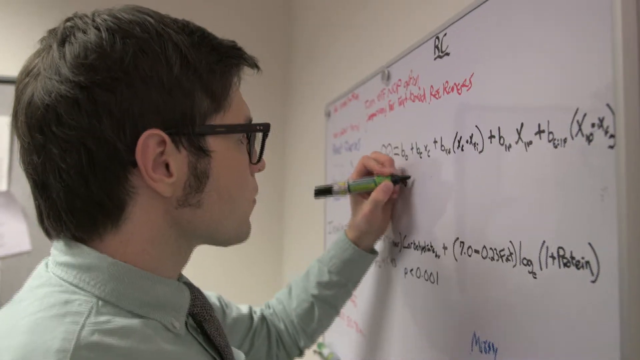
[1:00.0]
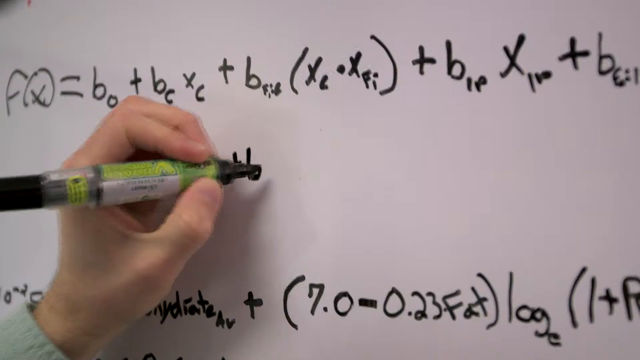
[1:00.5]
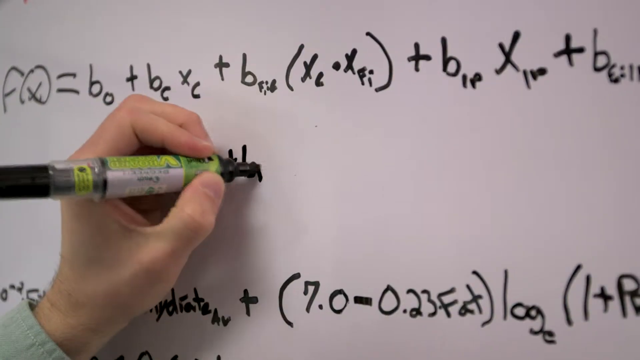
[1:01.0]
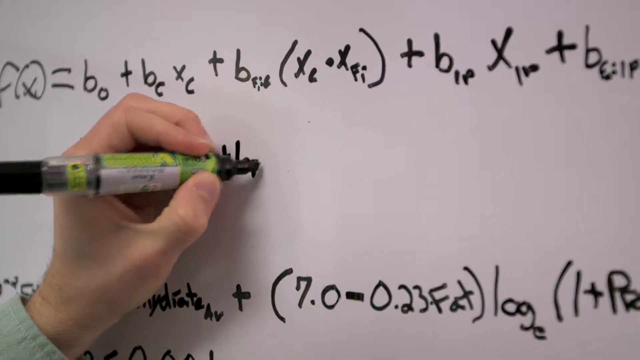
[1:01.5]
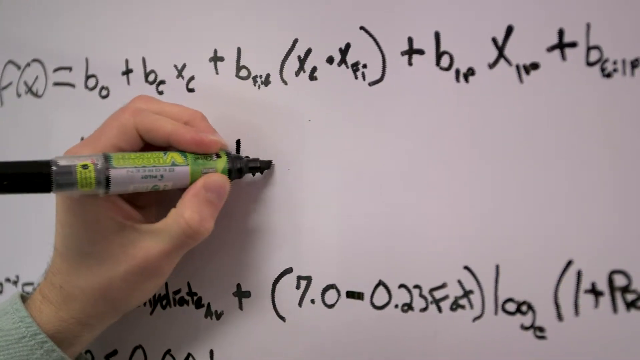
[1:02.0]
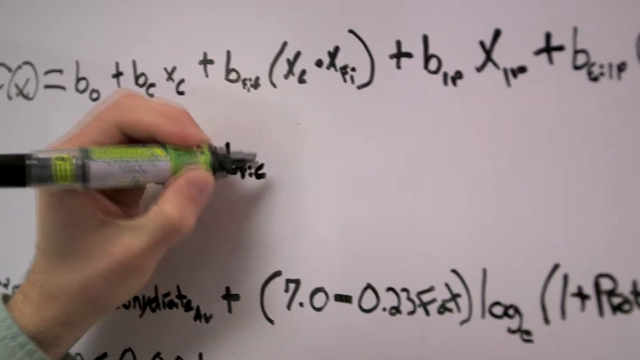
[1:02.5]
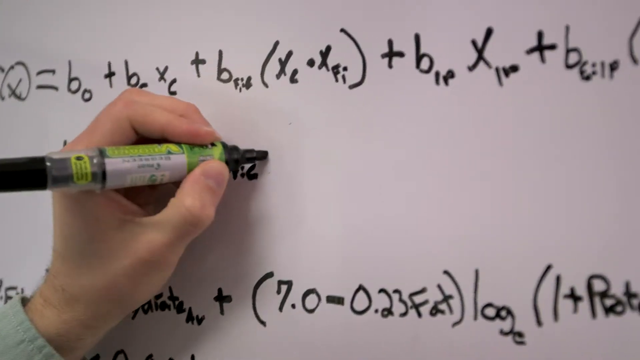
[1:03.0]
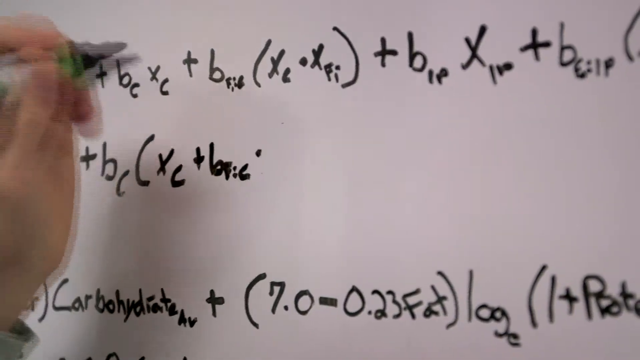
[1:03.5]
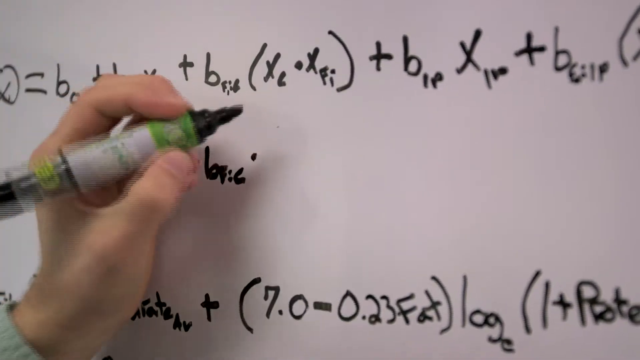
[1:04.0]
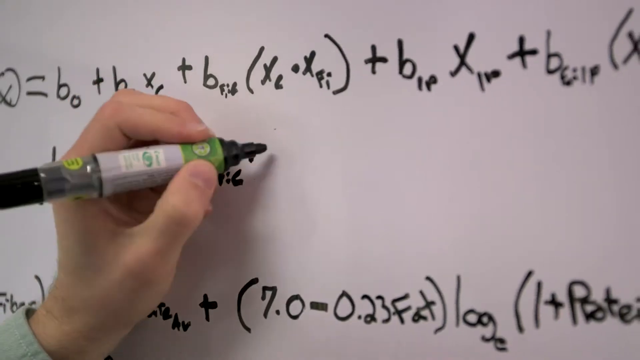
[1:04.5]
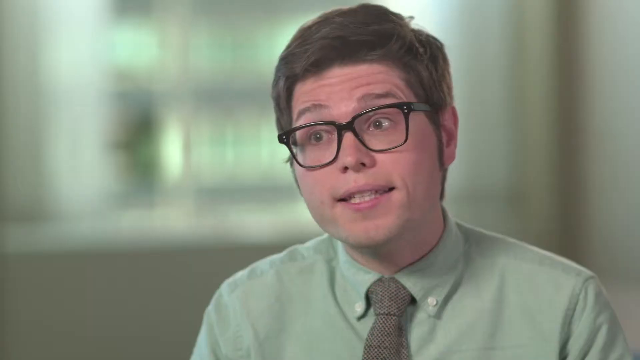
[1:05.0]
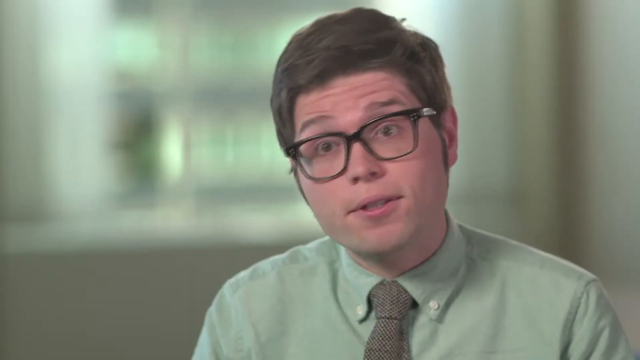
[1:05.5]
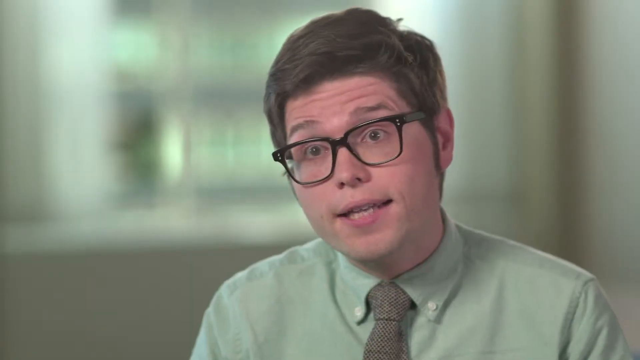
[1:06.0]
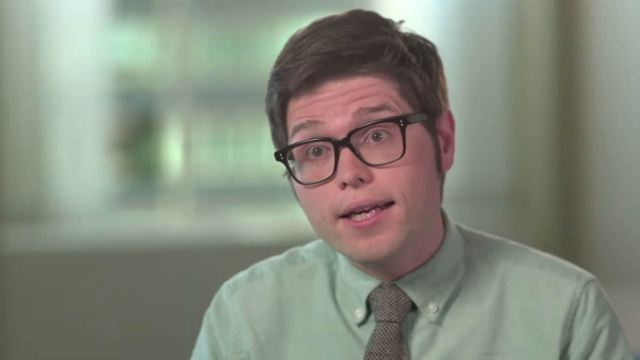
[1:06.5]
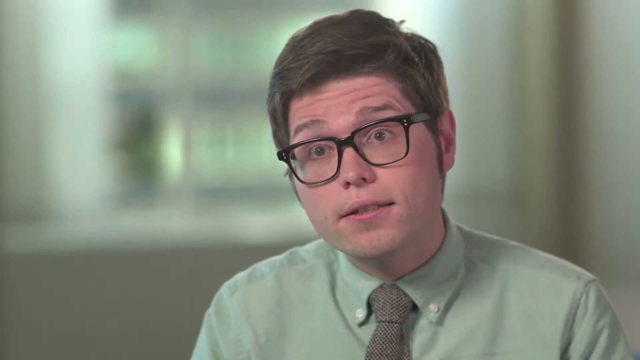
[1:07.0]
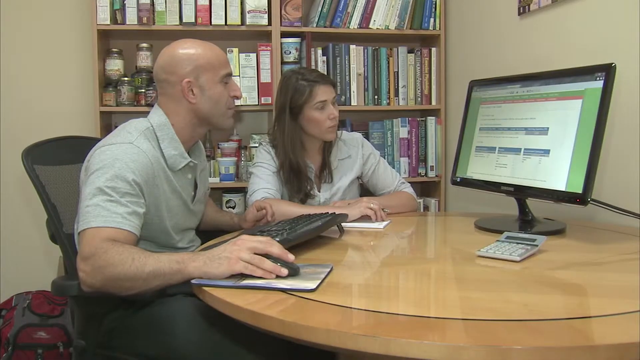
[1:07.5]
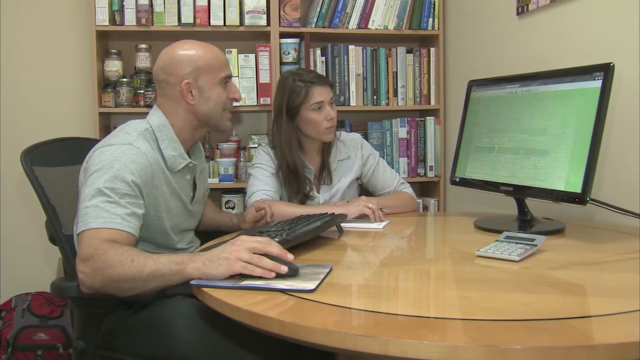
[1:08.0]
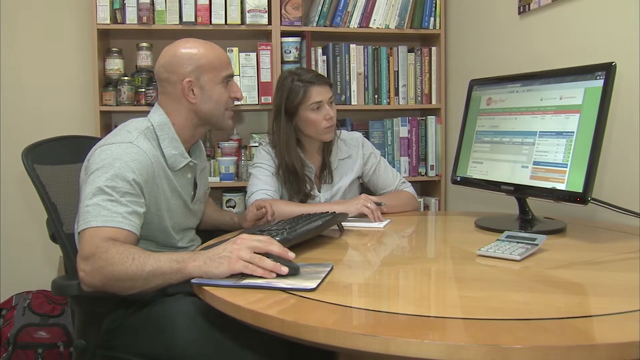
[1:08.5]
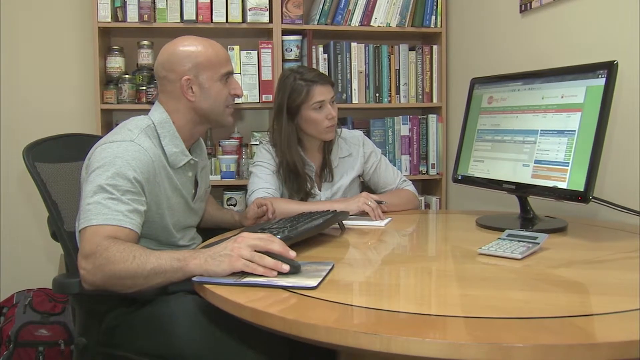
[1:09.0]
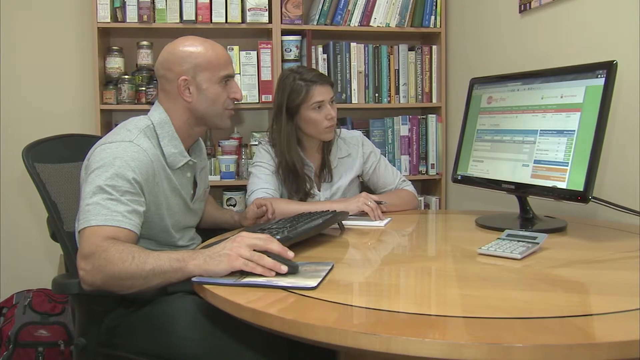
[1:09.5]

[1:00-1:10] In the classroom, the young man is up writing figures on the dry erase board in black ink. The video cuts to the office where he speaks, then to another office with a large bookshelf against the back wall and a large round brown wood table. Two people sit at the table, both looking at a large computer screen in the middle of it; what looks like a small calculator is in front of the screen. One is a bald man who looks to be around 30, wearing a short-sleeve light gray shirt; the other is a young woman who looks to be in her late 20s, wearing a white shirt, holding an ink pen, with a pad on the table in front of her. They look at the computer screen together. The video then returns to the young man writing on the board. The video is apparently about a nutrition program, which he apparently heads.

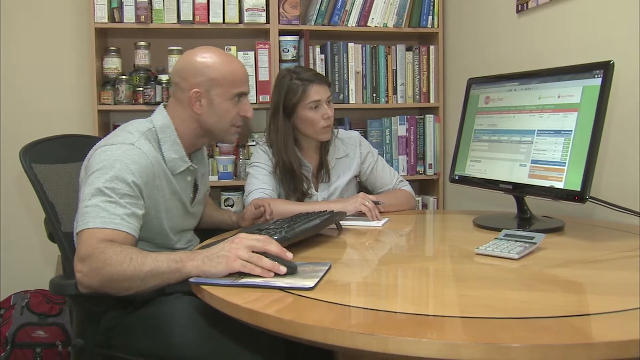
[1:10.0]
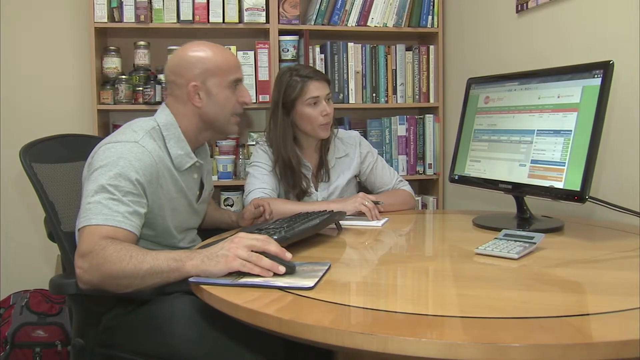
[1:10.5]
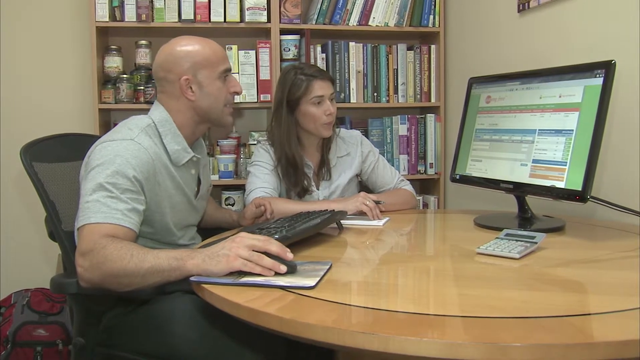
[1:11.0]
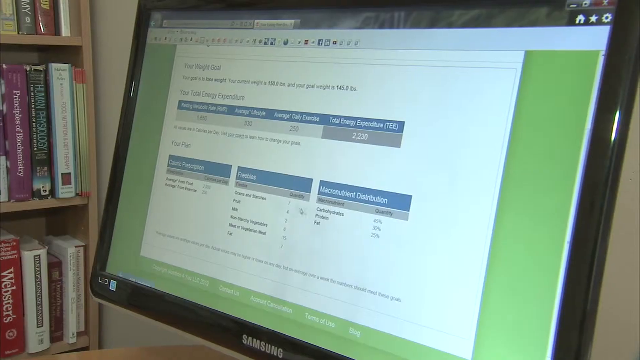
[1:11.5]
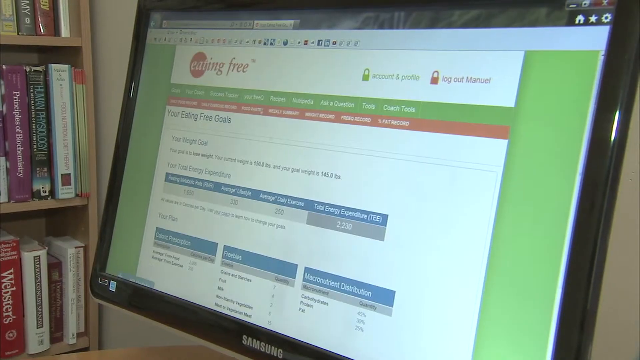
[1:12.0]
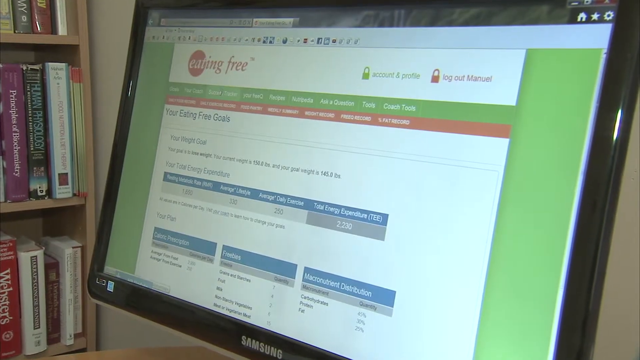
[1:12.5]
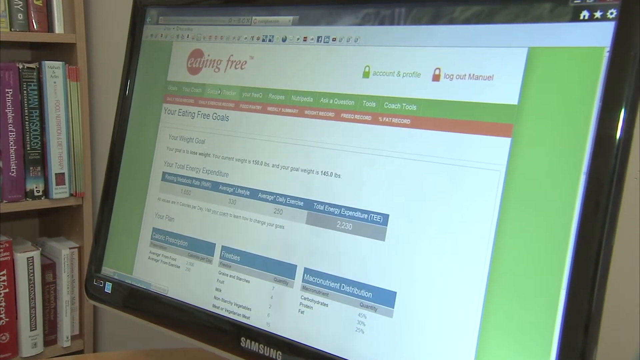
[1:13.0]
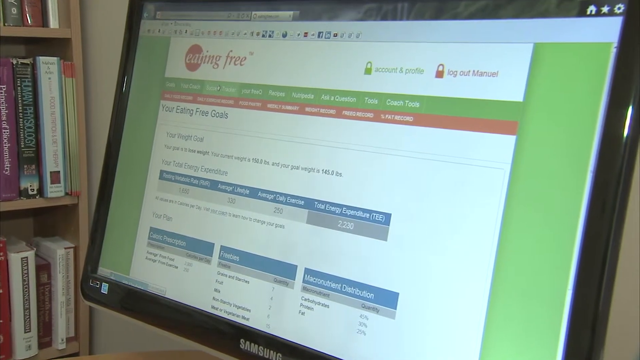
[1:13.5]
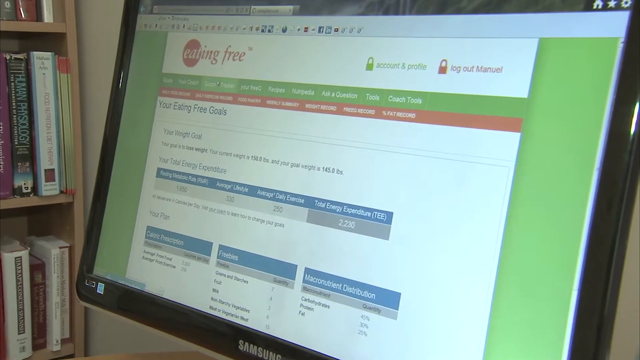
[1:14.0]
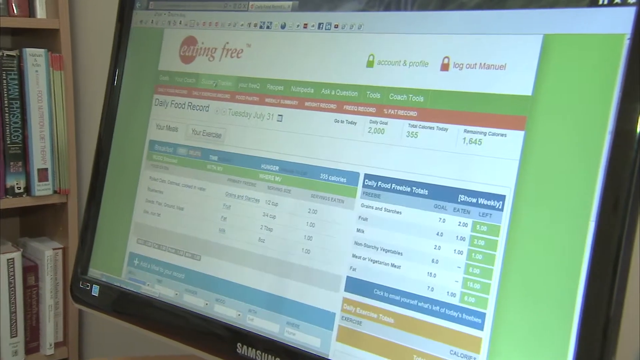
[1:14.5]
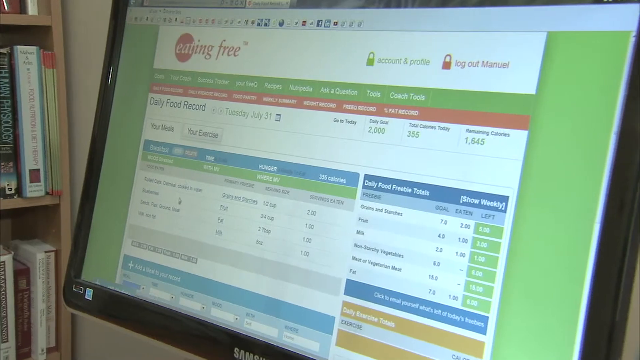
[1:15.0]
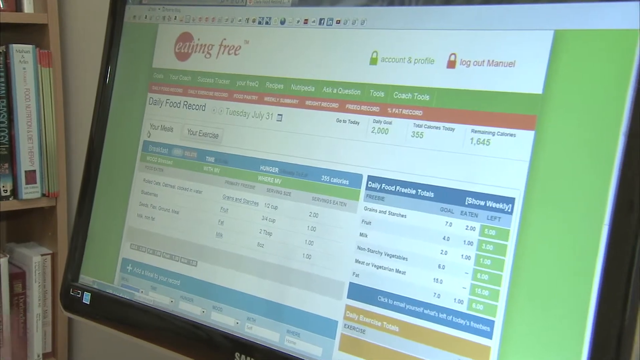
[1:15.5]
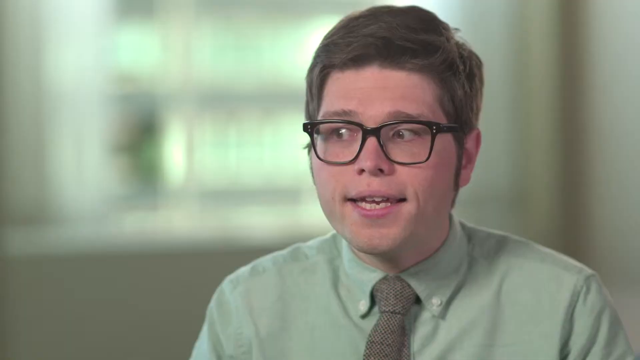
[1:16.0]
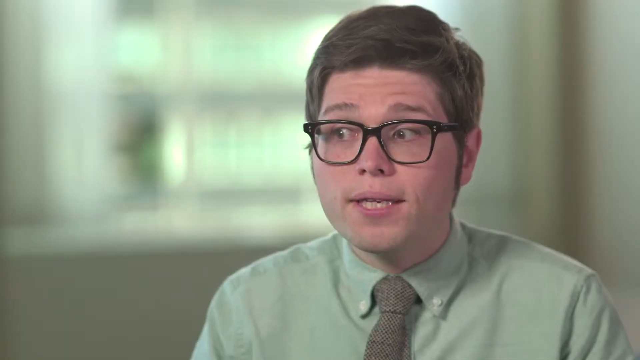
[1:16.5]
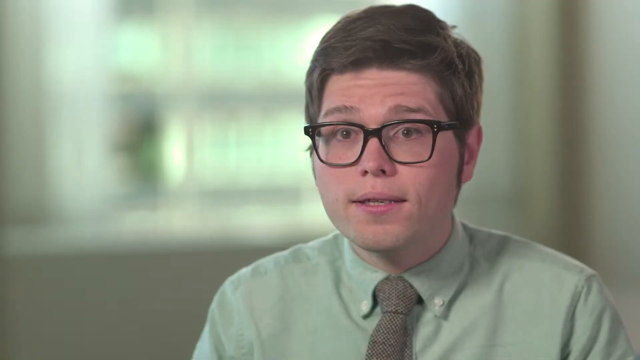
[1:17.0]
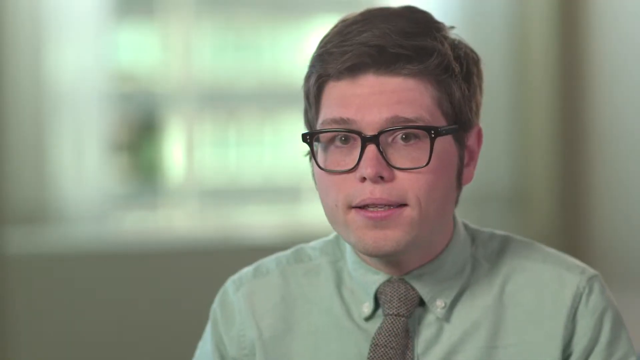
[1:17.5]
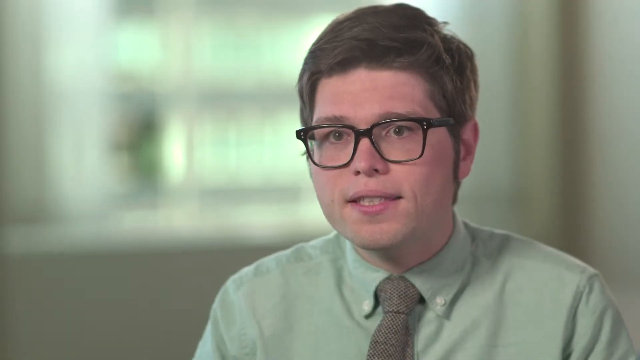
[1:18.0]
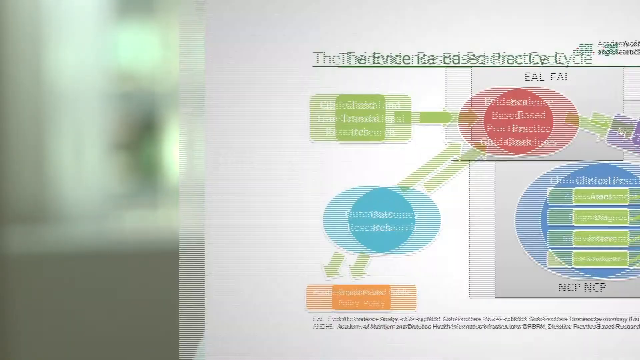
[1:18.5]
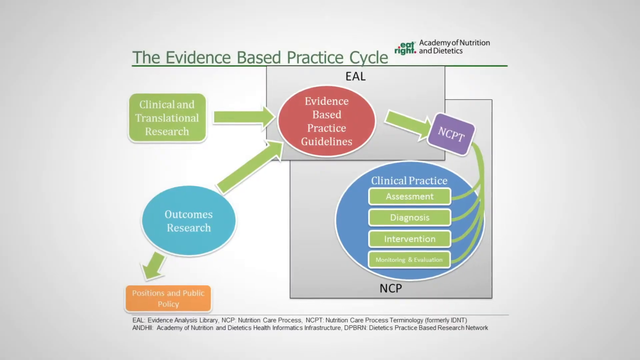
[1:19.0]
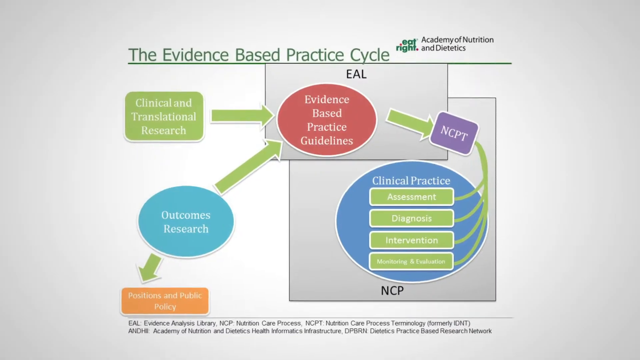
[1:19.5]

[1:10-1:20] In the room with the large bookshelf at the back, a large brown wooden table is against the other wall. The two people sit at the table with the big computer screen in the middle. A young bald man who looks to be in his early 30s has his right hand on a computer mouse and a black keyboard in front of him. A young woman who looks to be in her early 20s has long brown hair. Both stare at the computer screen showing forms, green around the edges and red at the top, with what looks like "living free" in red, plus a lot more information. The form changes, and the video goes back to the young man with short black hair, long sideburns and black-rimmed glasses. It then moves to a form titled "the Evidence-Based Practice Cycle" with several oval shapes on a white background, reading "Evidence-Based Practice Guidelines", "Outcomes, Research" and "Clinical Practice". Several of these circles contain a lot of information, and the diagram is from the Academy.